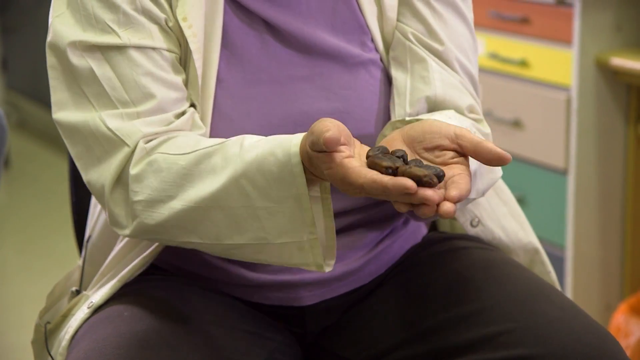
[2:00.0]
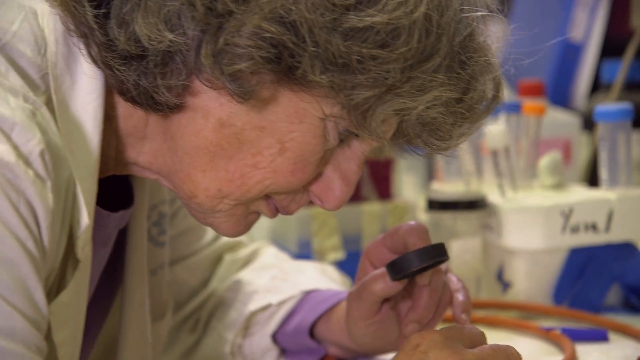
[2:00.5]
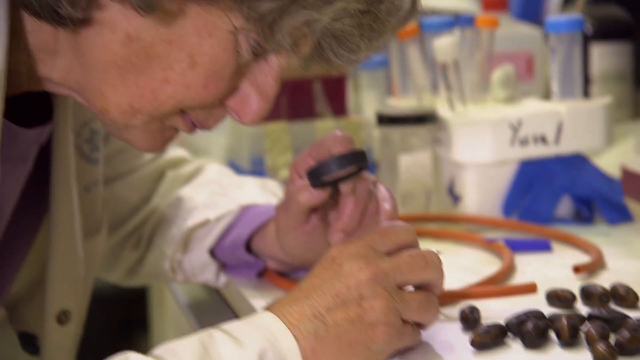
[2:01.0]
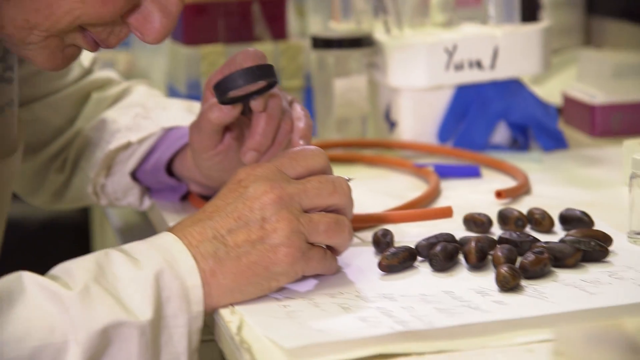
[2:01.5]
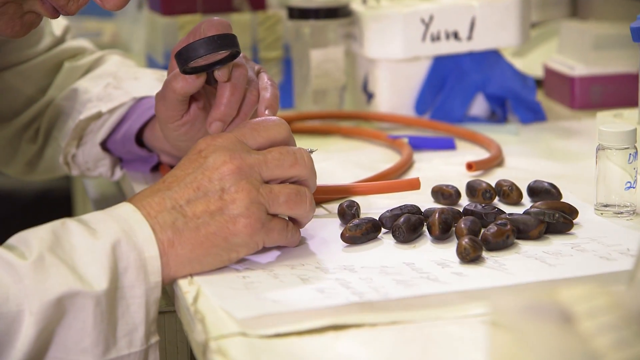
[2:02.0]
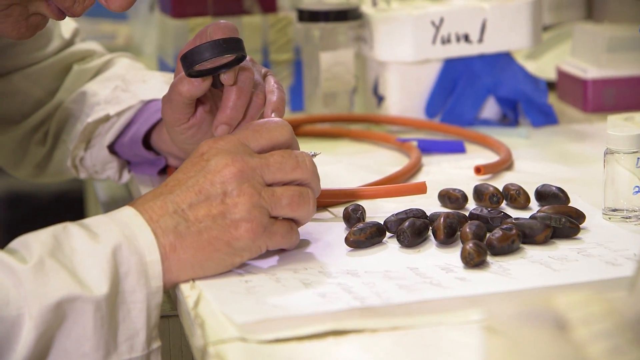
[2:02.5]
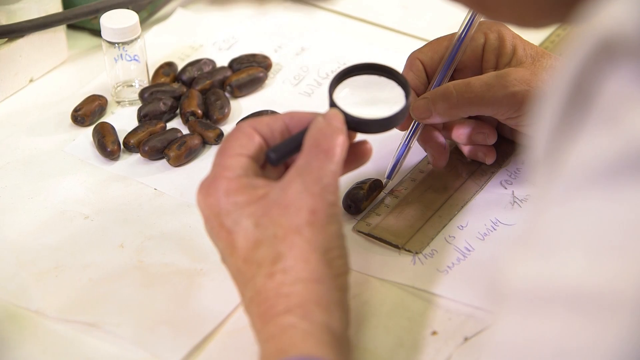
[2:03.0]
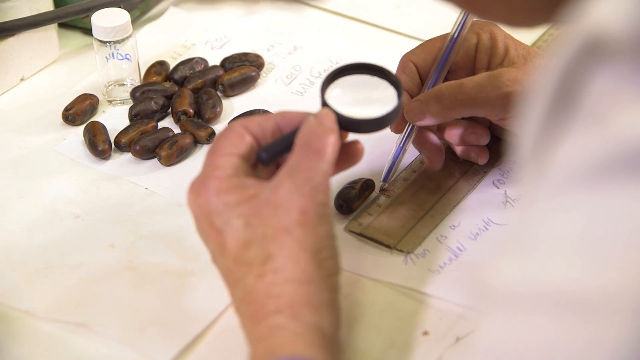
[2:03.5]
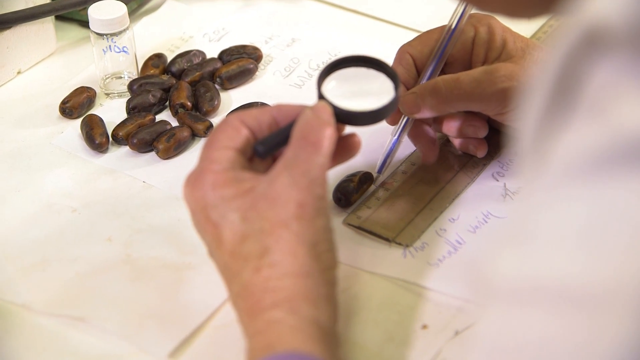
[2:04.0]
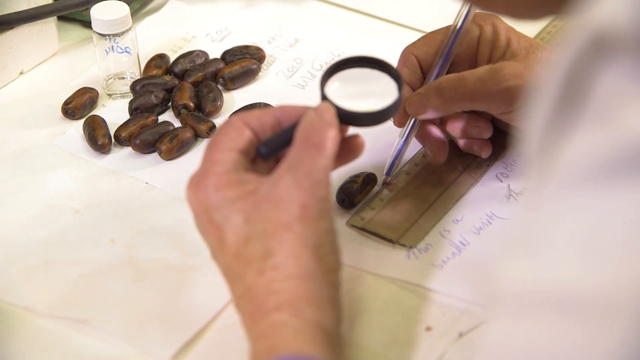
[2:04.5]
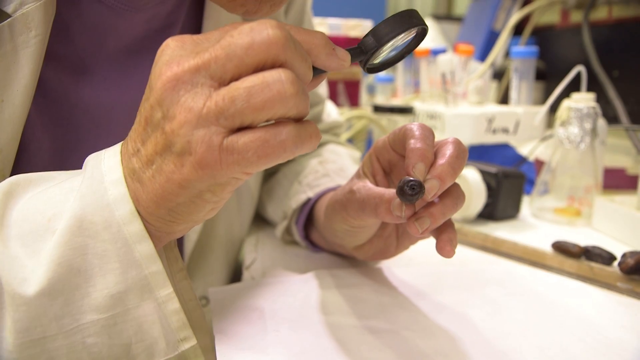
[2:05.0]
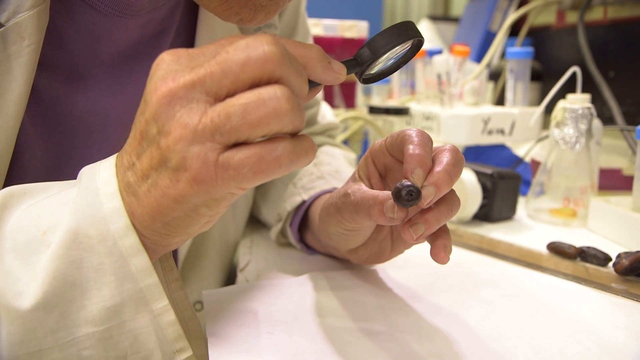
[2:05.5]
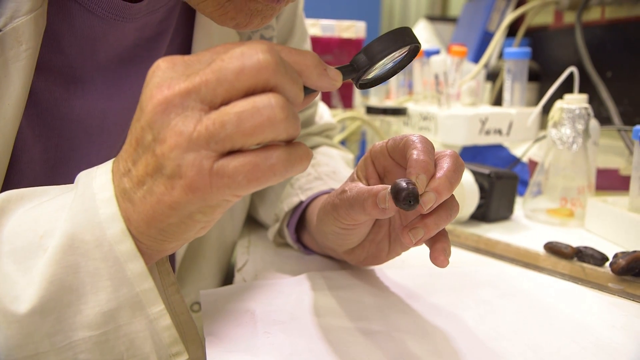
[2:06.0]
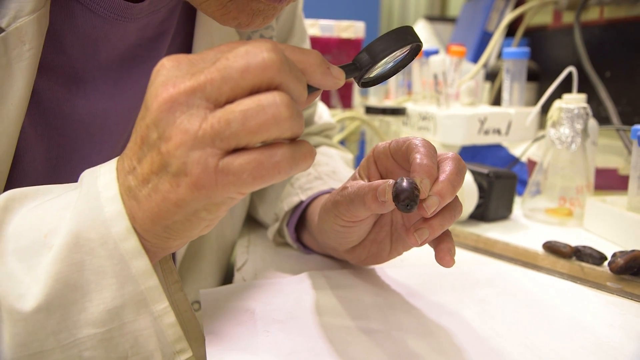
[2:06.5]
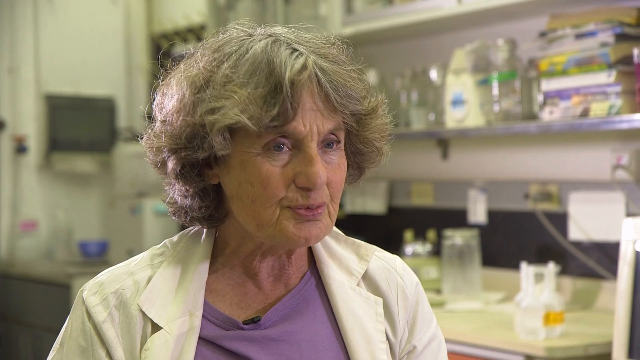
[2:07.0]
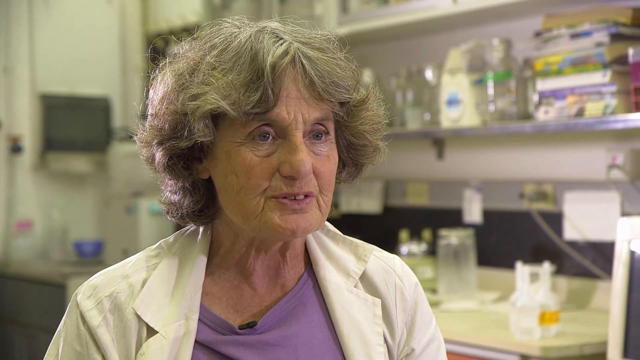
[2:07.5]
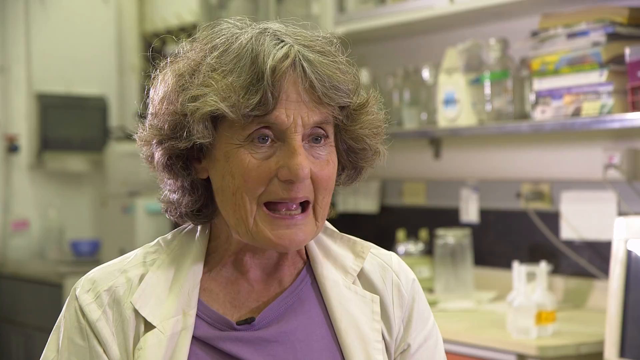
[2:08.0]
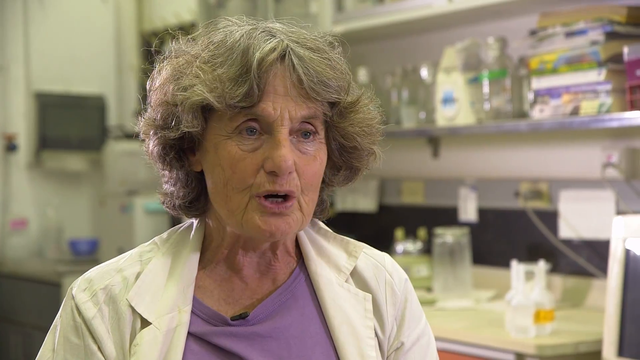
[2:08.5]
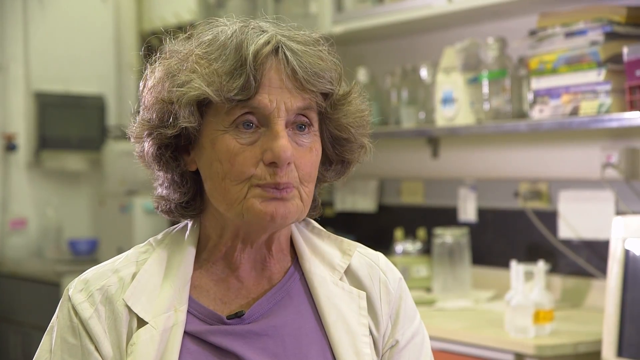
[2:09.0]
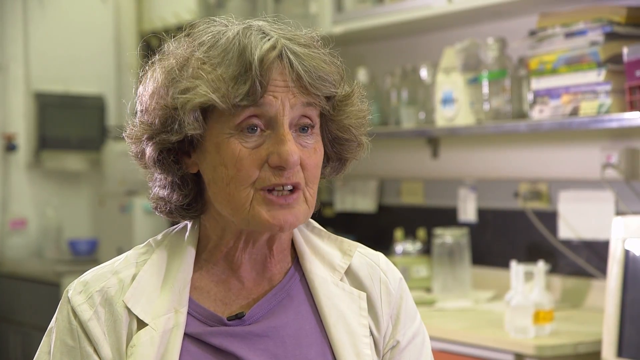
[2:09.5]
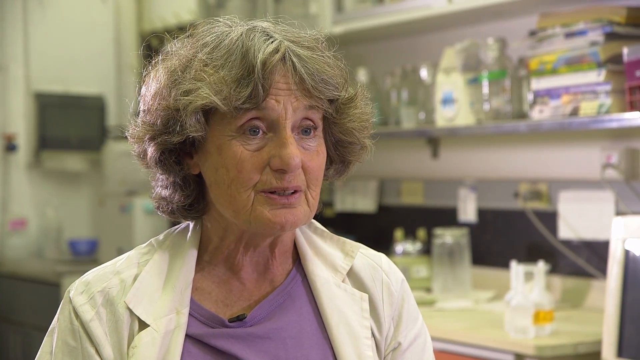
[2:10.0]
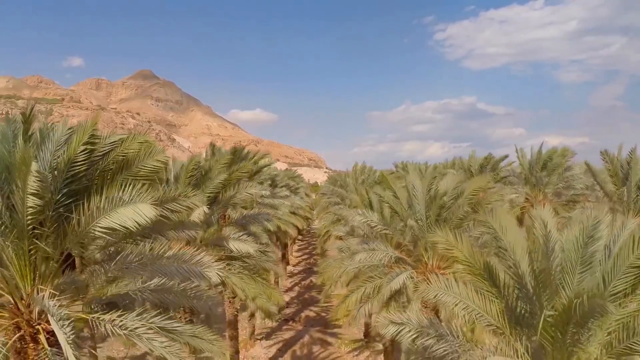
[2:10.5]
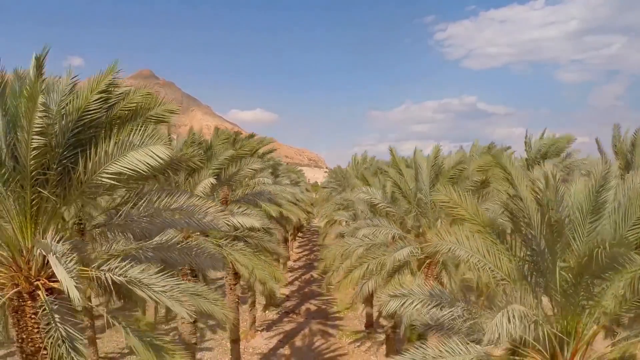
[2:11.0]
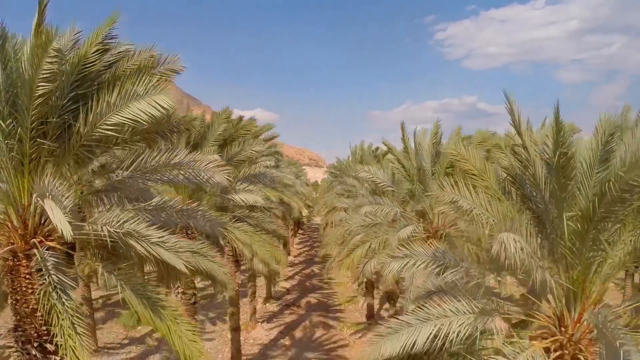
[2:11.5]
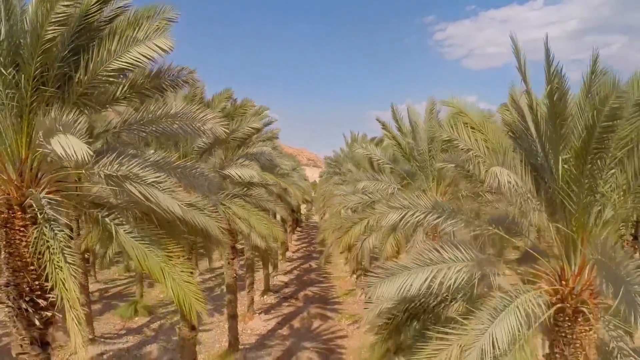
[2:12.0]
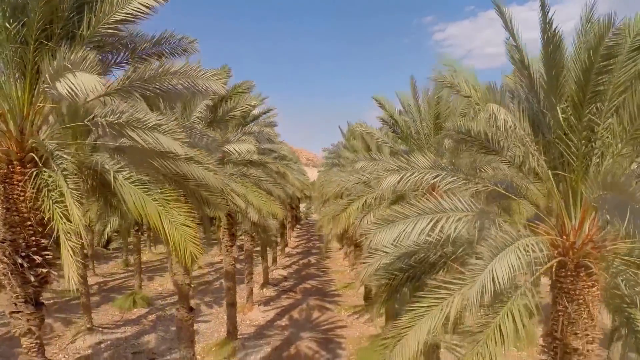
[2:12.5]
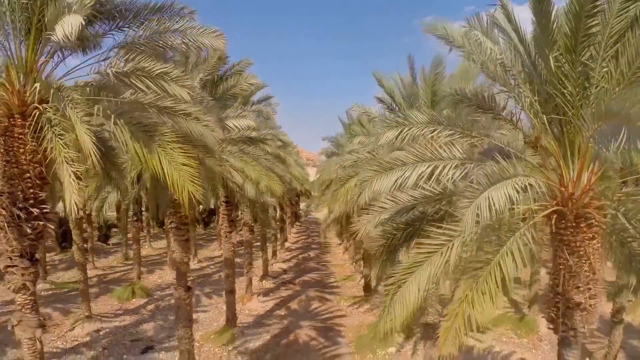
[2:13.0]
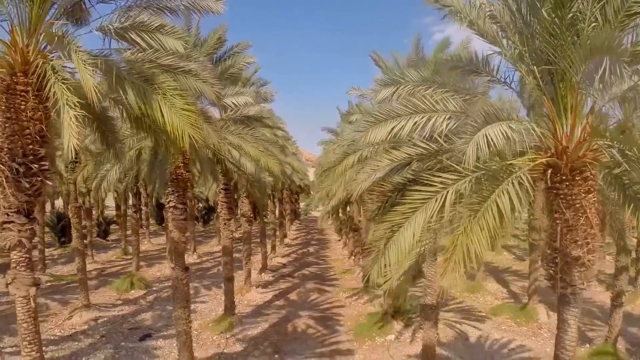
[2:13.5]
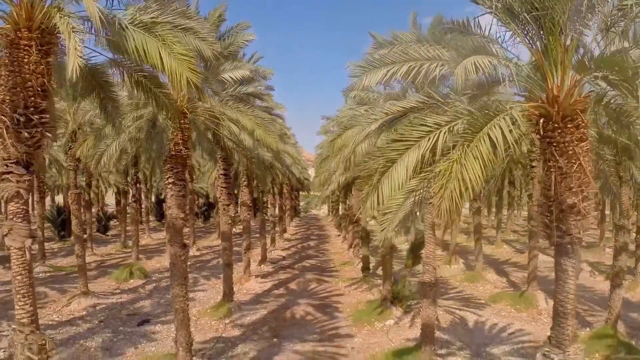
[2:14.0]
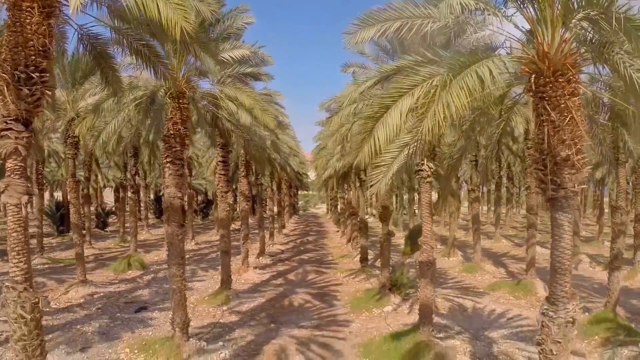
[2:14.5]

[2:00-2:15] A woman, a doctor, looks through a magnifying glass at a Judean date palm seed, then measures it in inches while using a small magnifying glass. The video shifts to her talking and then to a field of these palm trees. The table in her lab seems to have maybe a dozen or so nuts on it, and the lab in the background has a lot of beakers. Part of the plantation appears to have some kind of mountain or plateau in the background; the location is probably somewhere in the Middle East.